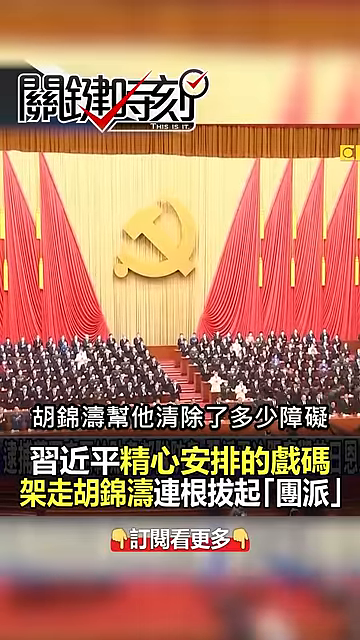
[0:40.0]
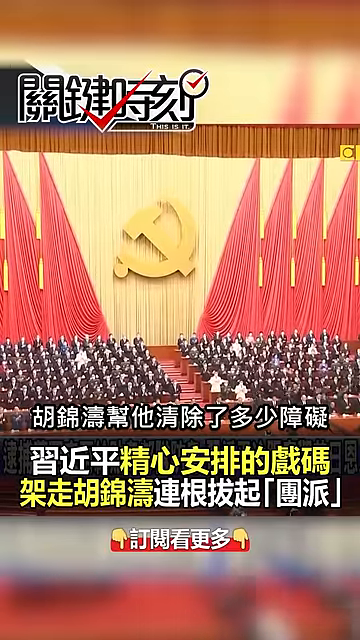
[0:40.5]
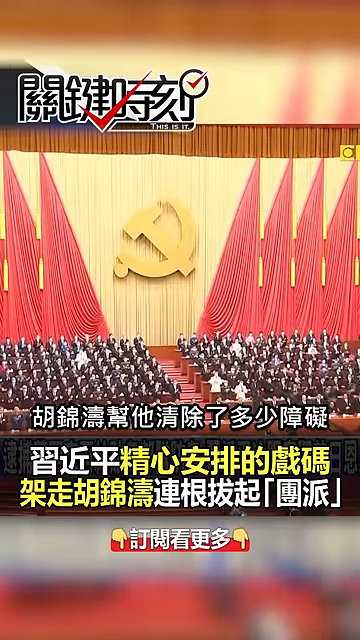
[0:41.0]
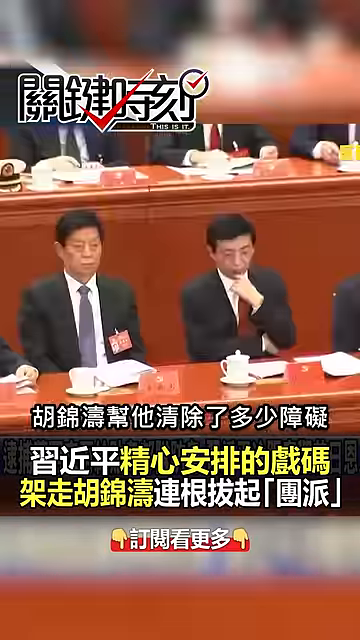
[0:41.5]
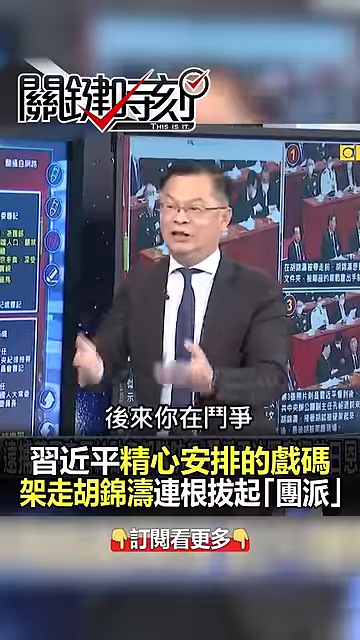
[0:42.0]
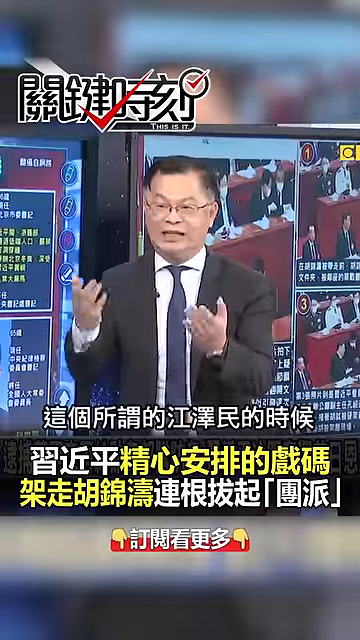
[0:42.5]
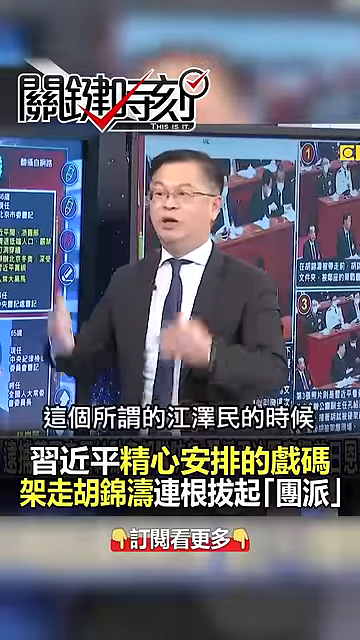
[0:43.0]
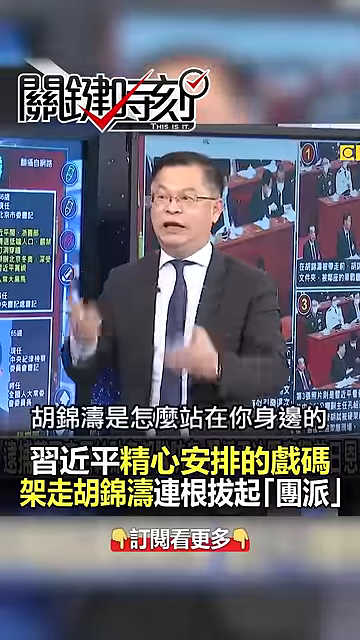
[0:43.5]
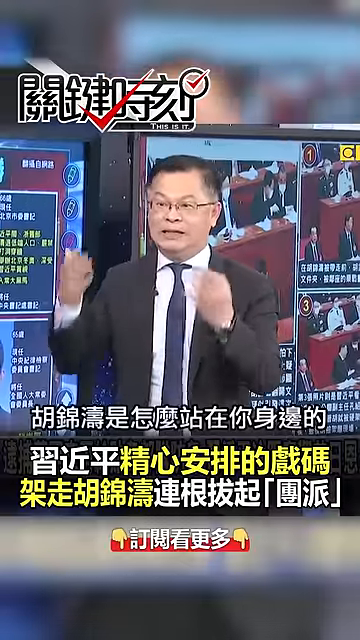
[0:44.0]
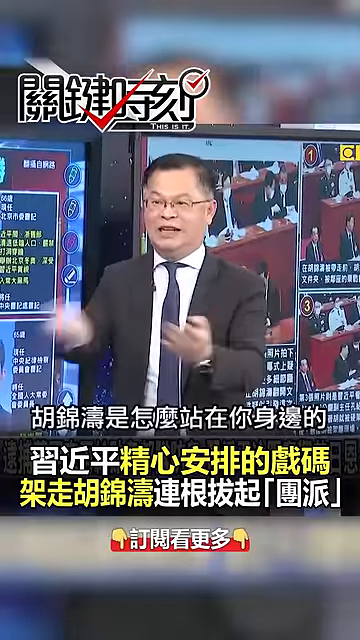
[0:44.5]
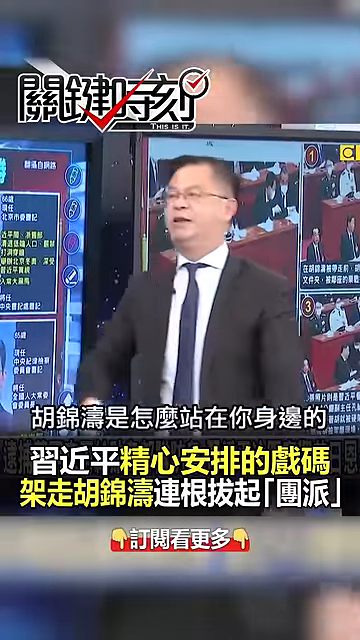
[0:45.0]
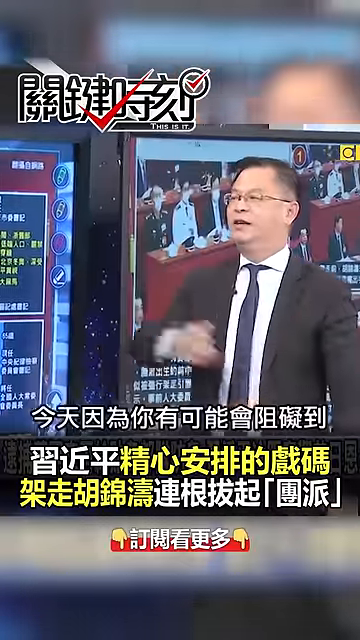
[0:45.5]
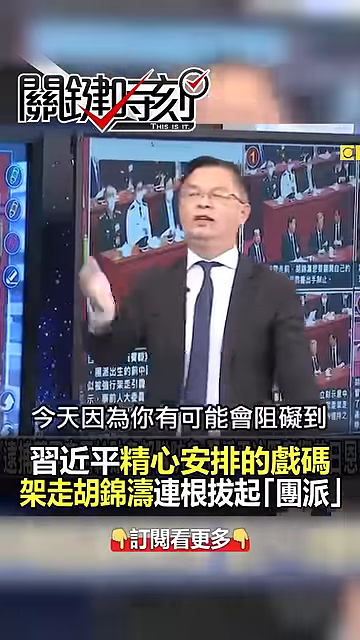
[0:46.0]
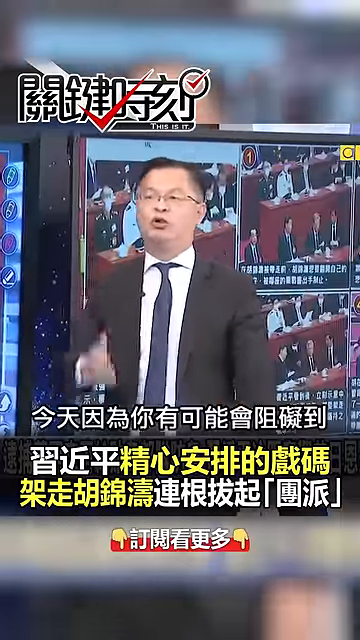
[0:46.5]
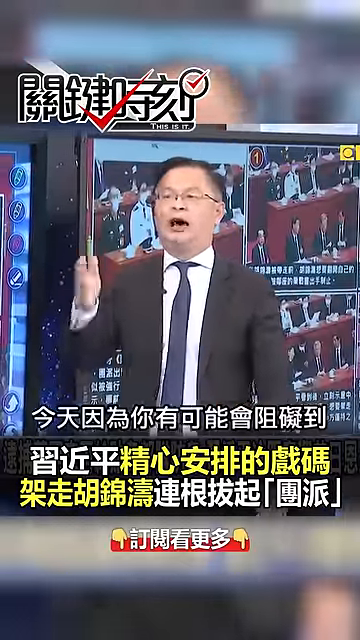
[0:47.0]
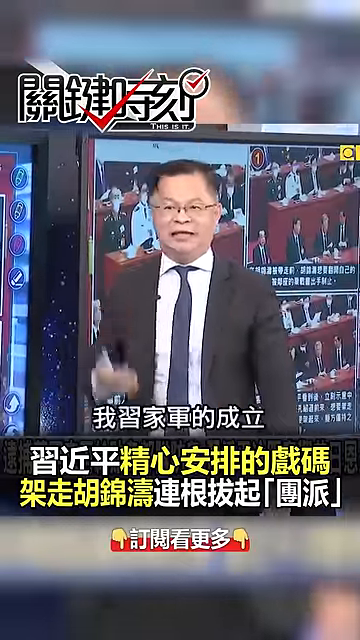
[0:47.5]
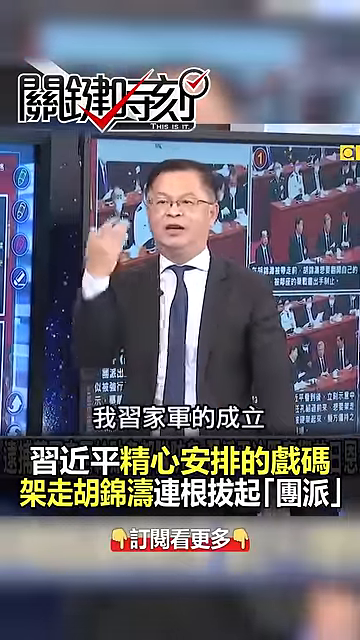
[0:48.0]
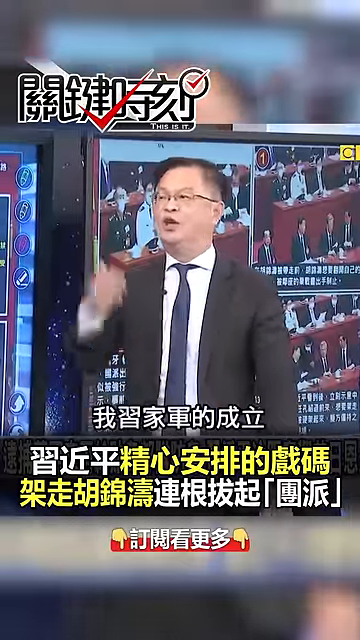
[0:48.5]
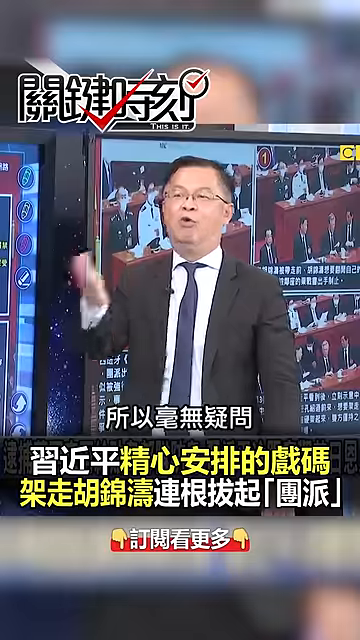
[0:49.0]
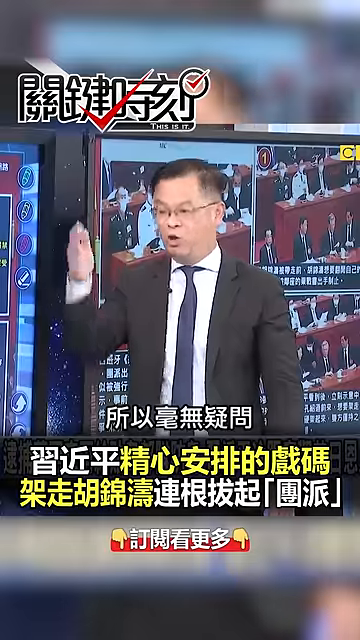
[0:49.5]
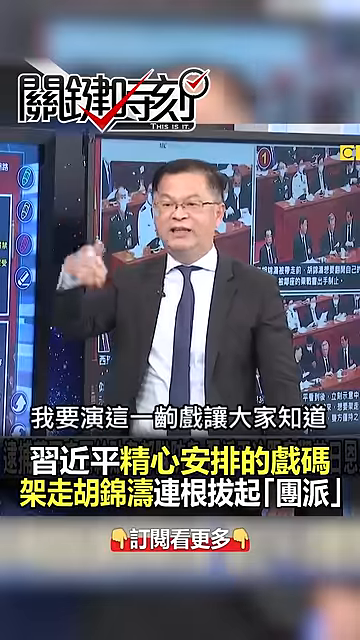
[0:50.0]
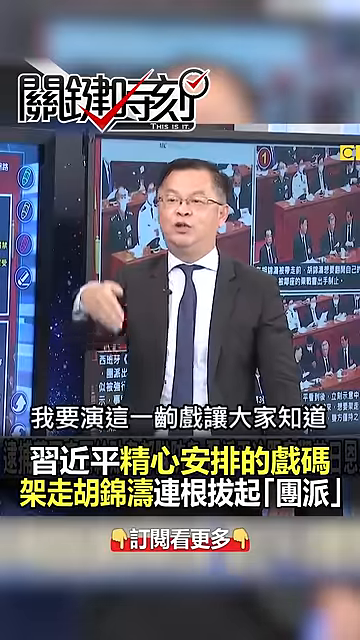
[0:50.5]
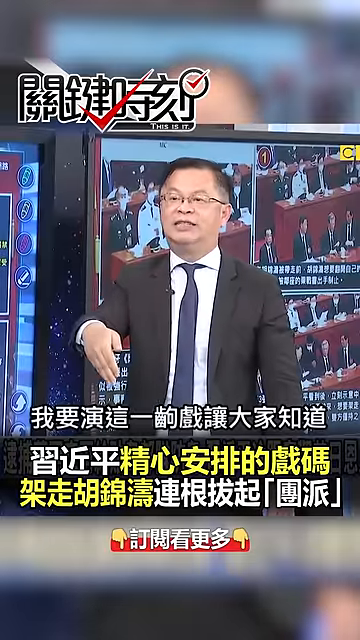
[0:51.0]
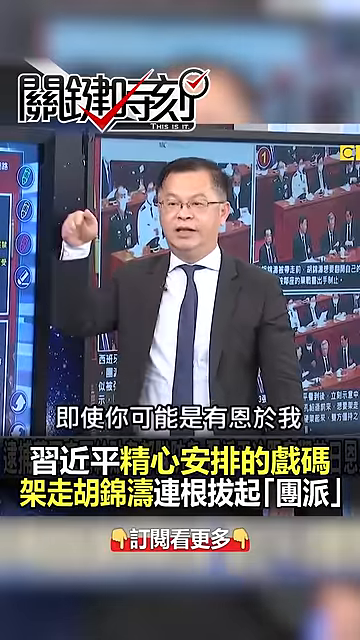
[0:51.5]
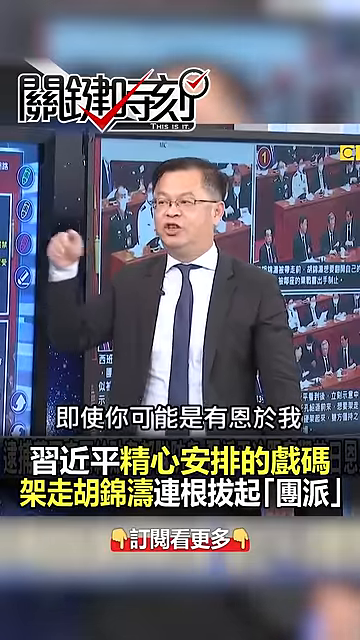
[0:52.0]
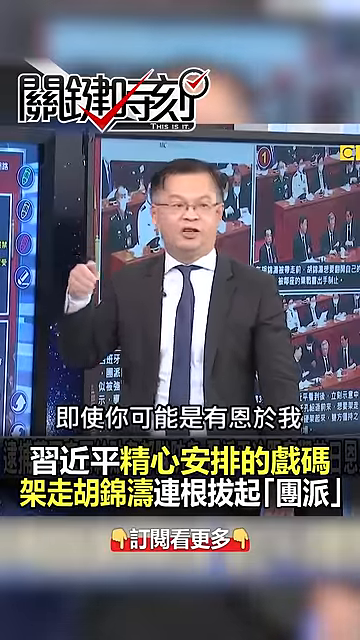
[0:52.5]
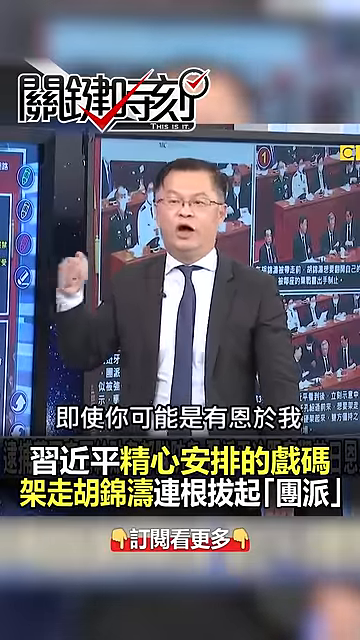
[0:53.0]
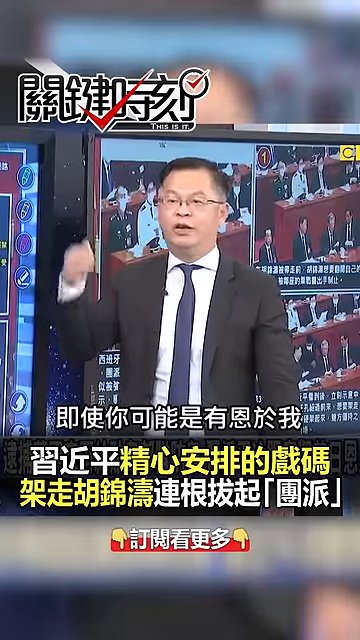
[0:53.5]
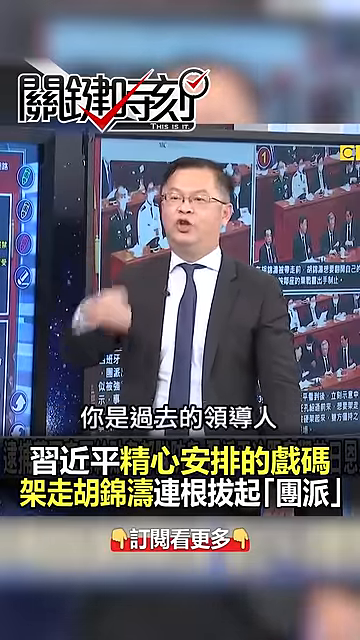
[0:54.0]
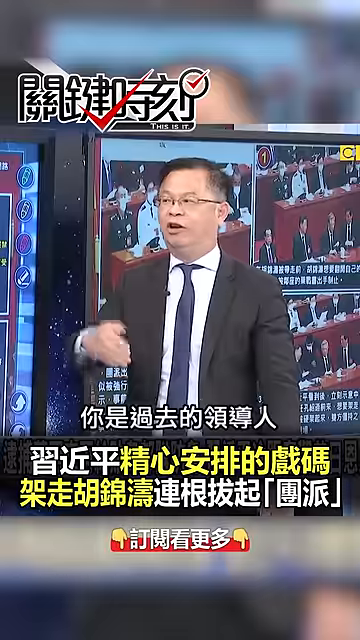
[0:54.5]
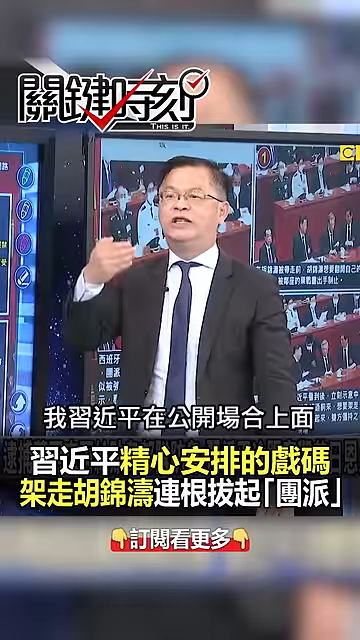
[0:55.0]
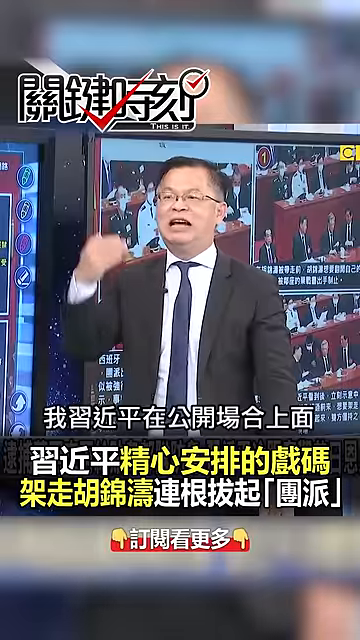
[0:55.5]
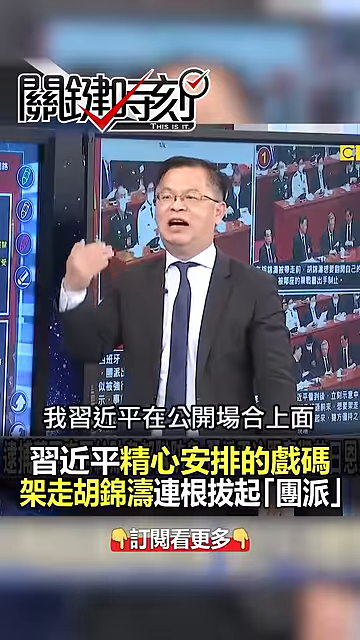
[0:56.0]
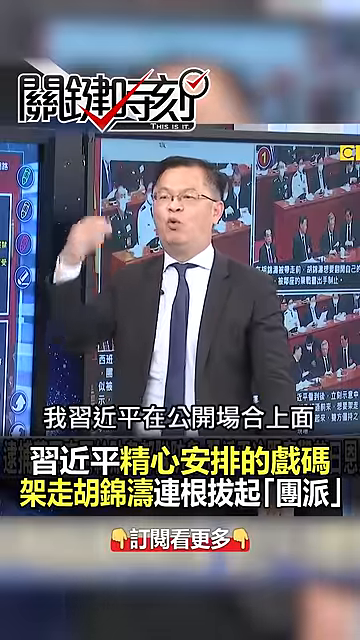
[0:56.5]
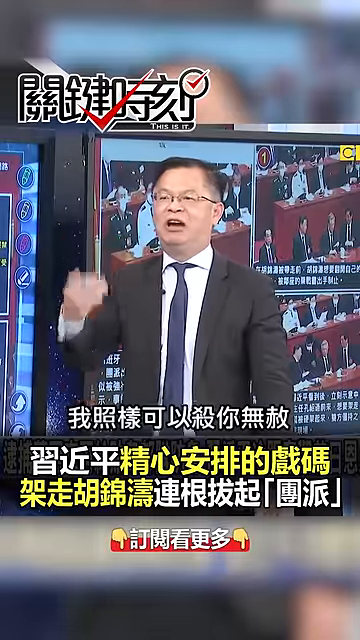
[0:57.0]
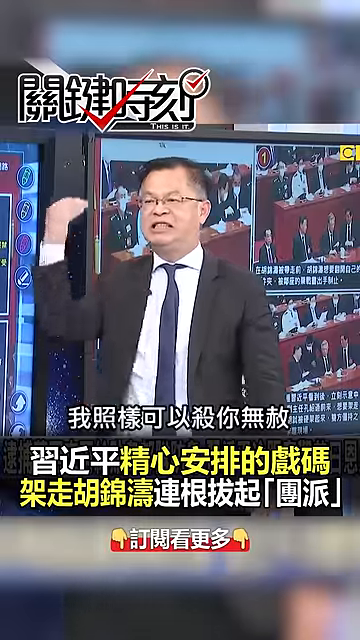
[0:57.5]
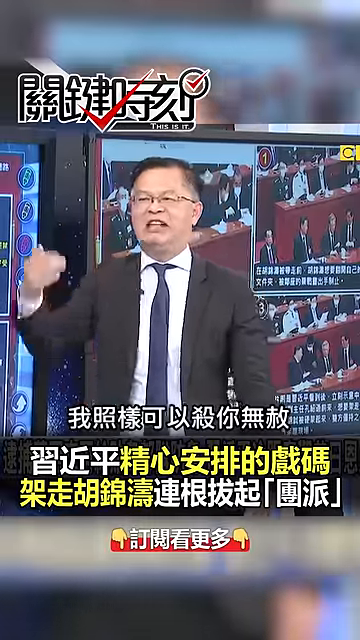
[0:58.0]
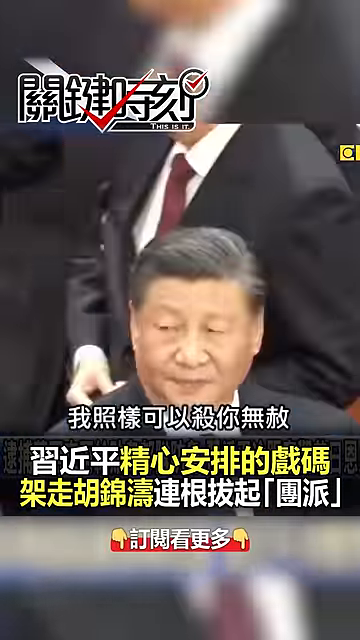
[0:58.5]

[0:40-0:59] A yellow background shows the Chinese symbol from the flag, followed by Chinese officials at a meeting with very formal-looking wooden desks in the background. A man, possibly a newscaster, points at screens, flails his arms, points downwards, points to pictures and yells. The view pans over to the officials, and he yells more, flailing his arms and pointing back and forth between what is in front of him and what is on the screen. The pictures possibly show the Chinese president and some of the officials. Pictures of cabinet rooms and officials are vaguely visible in the background, but everything moves quickly, and none of the writing is in English. The man appears angry and dismayed.